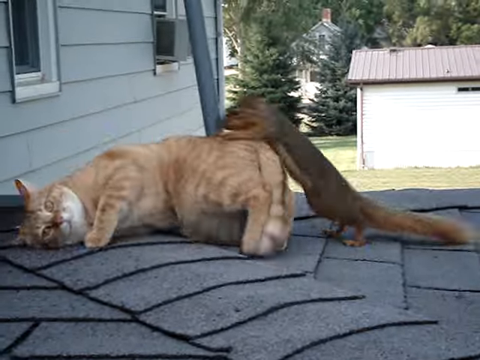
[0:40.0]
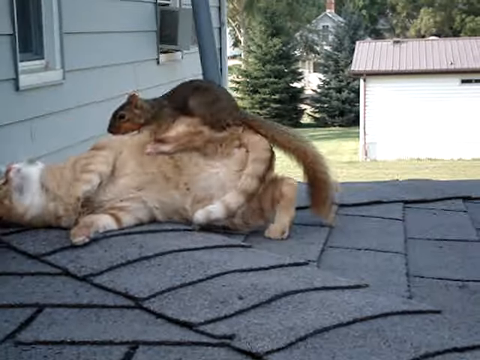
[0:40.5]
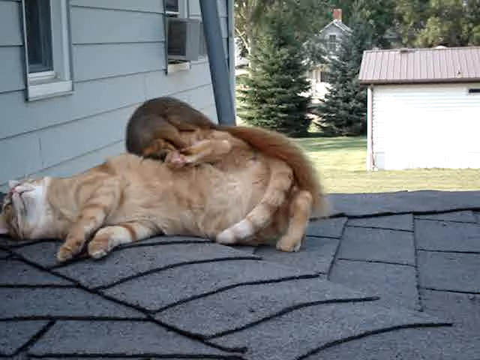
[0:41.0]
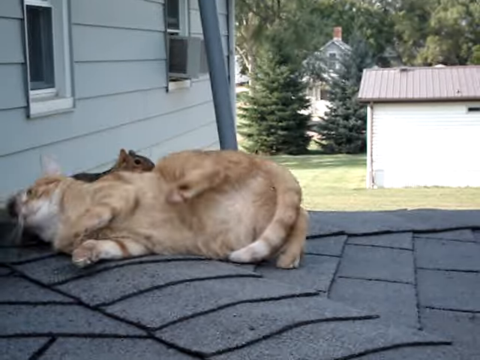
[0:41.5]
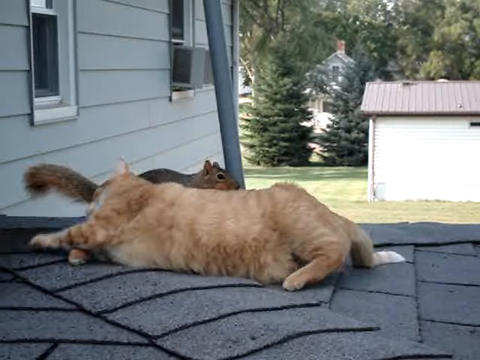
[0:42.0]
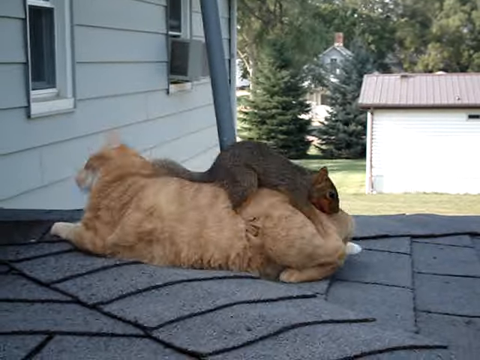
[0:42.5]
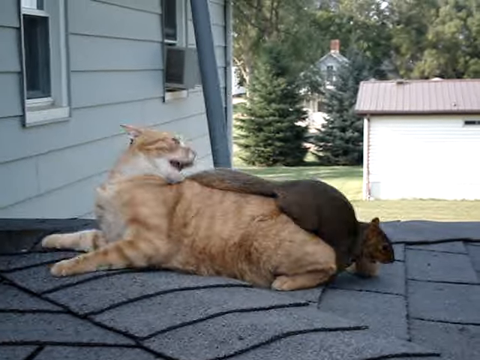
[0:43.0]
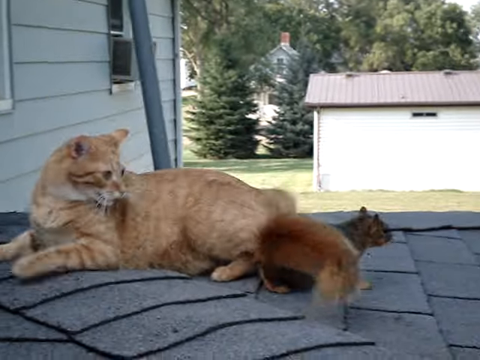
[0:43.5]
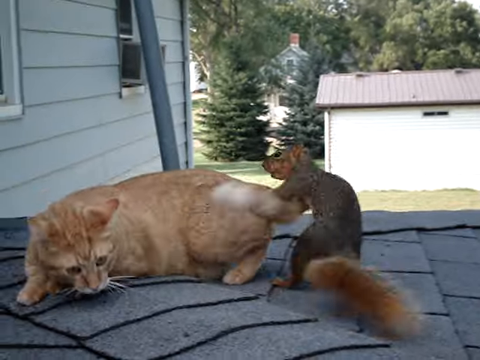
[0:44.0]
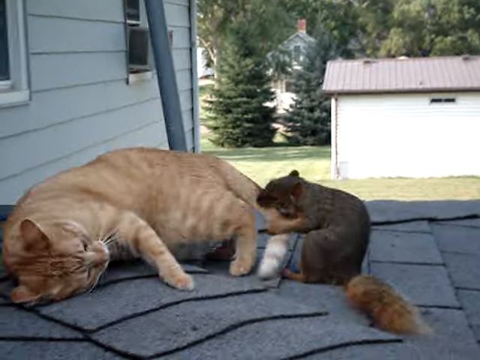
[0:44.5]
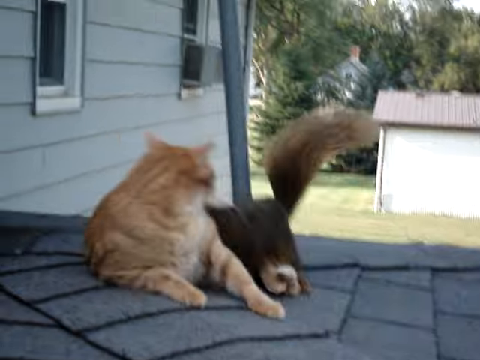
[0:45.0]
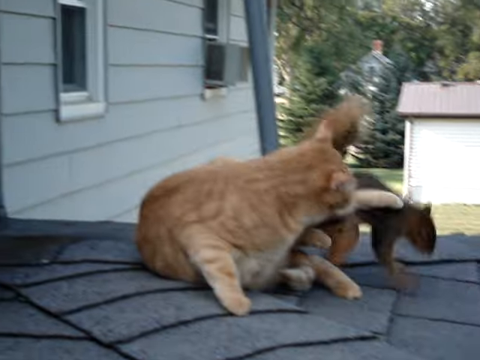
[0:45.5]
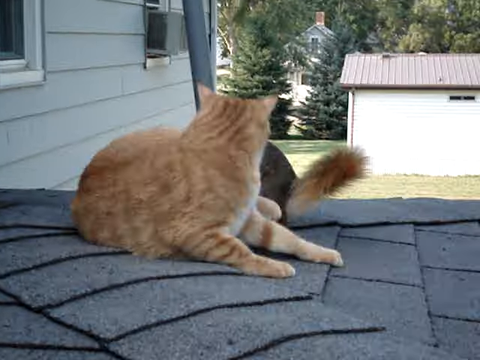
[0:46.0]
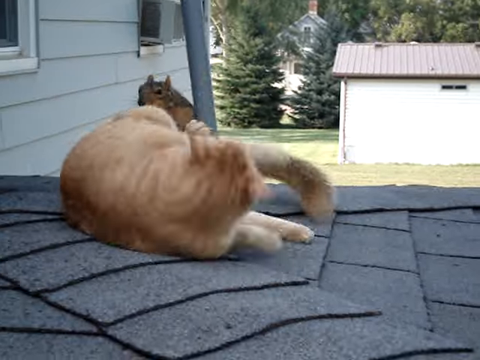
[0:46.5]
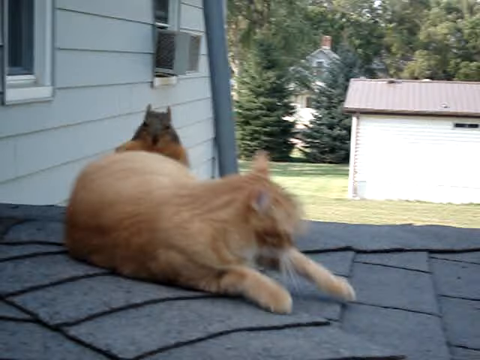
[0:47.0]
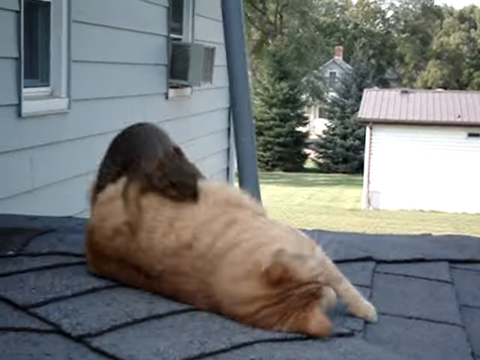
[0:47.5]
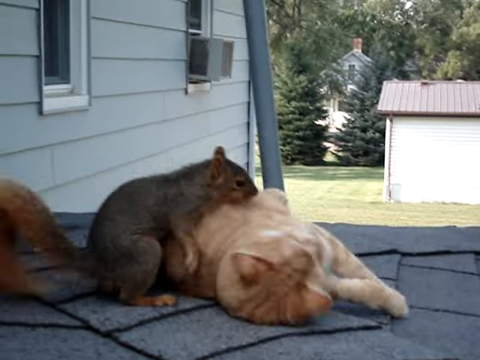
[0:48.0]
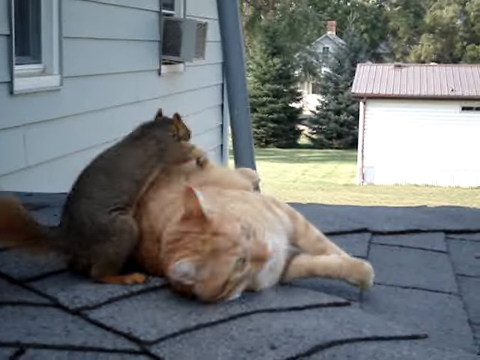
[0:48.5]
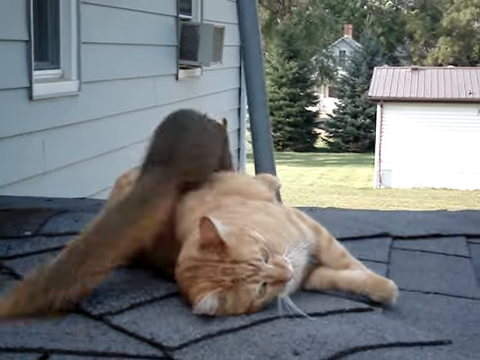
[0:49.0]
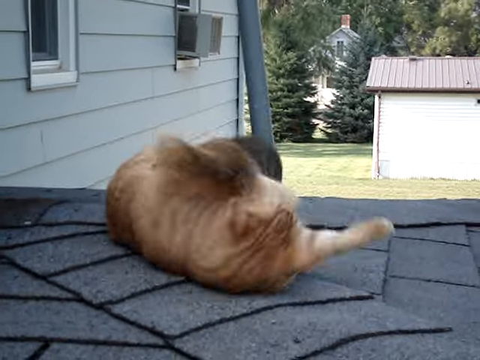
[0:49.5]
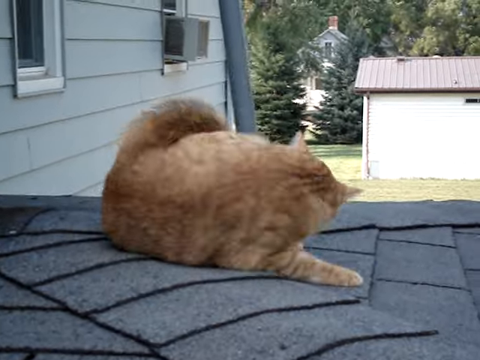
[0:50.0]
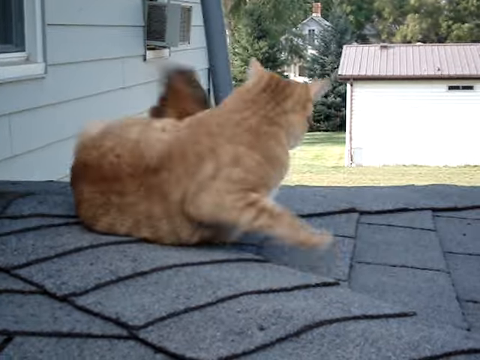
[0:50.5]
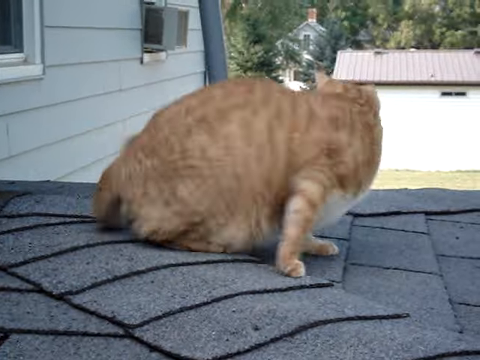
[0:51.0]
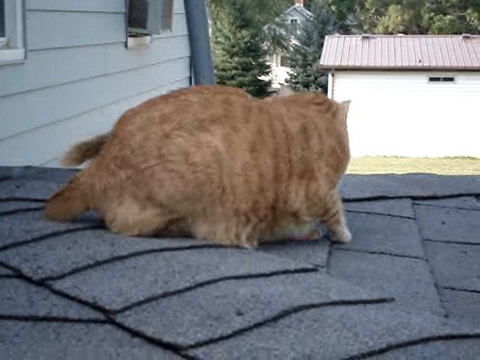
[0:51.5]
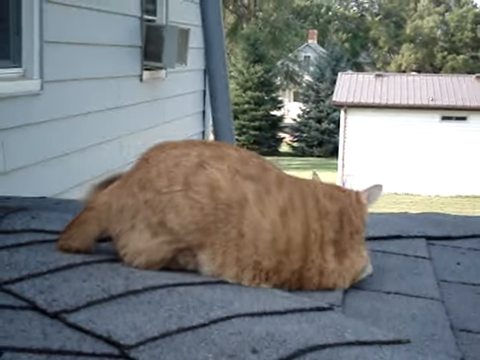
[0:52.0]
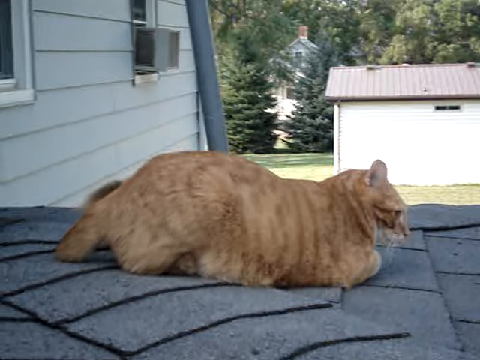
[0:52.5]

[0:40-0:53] The cat lies flat on its side while the squirrel has a go at it, jumping up and down, jumping on the cat and on the roof. The cat picks up its head and turns its body, and the squirrel keeps playing, pulling the cat's tail and jumping at it. The cat puts its paws on the squirrel, then wakes up for a bit, goes around the pole that is under the roof, and lies flat down. The squirrel plays with the cat's tail for a few seconds, and the cat does nothing to stop it. For a few seconds they both sit up and look at one another, then the play starts again on the roof: the squirrel jumps on the cat, and the cat looks at the squirrel and watches it play with its tail. Then they sit down.